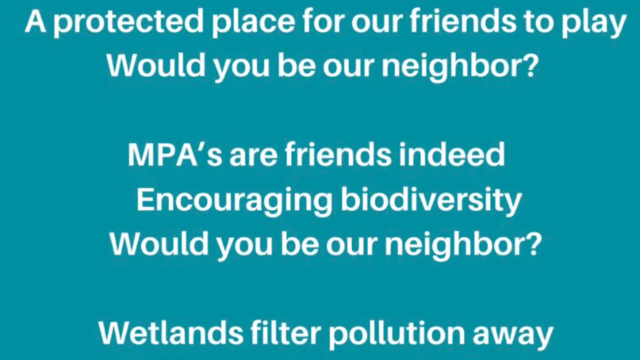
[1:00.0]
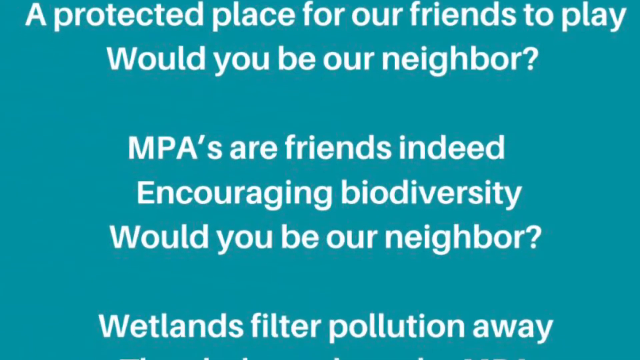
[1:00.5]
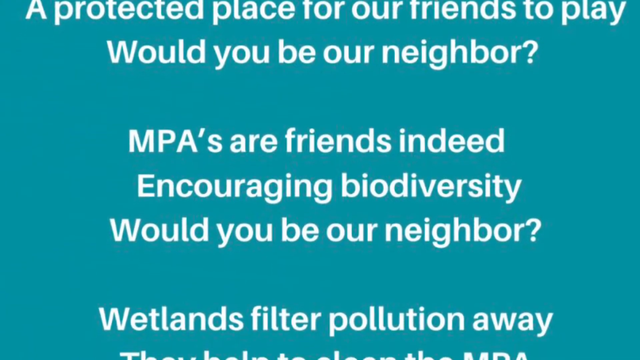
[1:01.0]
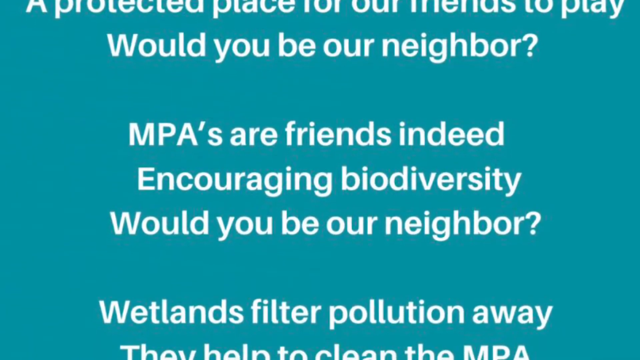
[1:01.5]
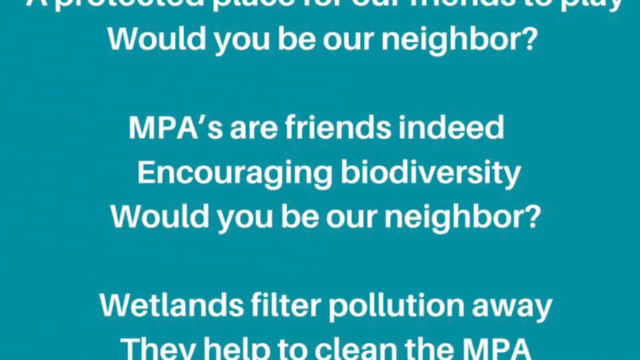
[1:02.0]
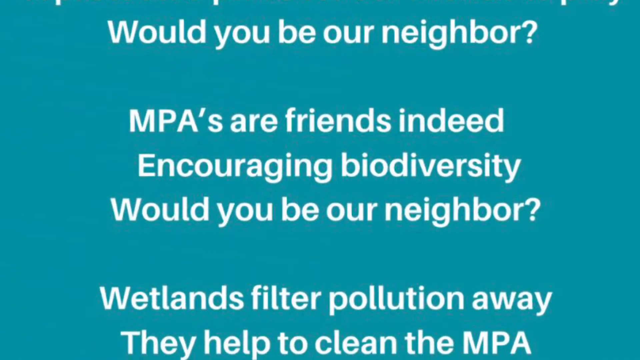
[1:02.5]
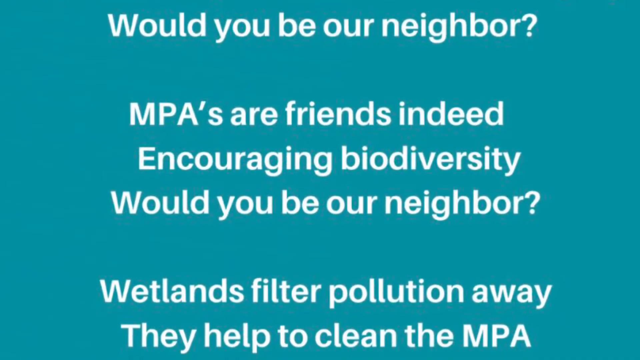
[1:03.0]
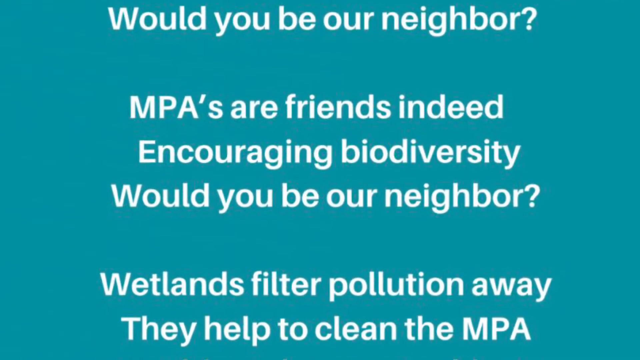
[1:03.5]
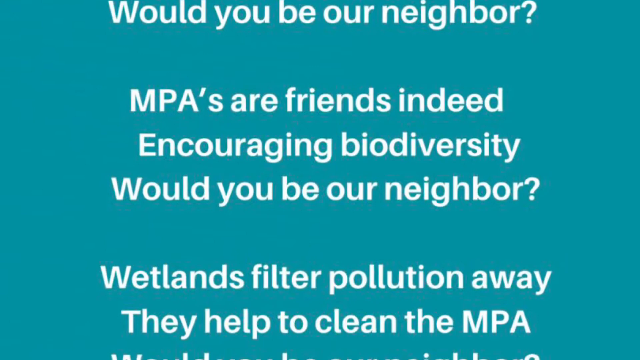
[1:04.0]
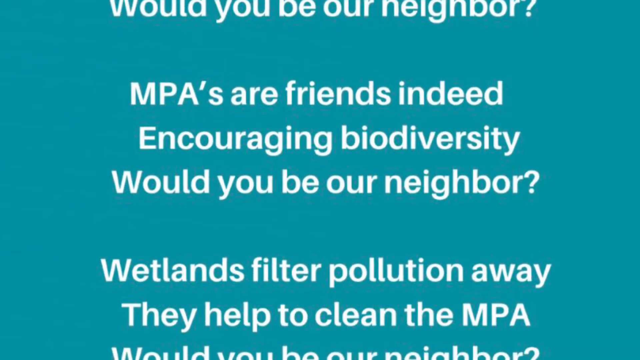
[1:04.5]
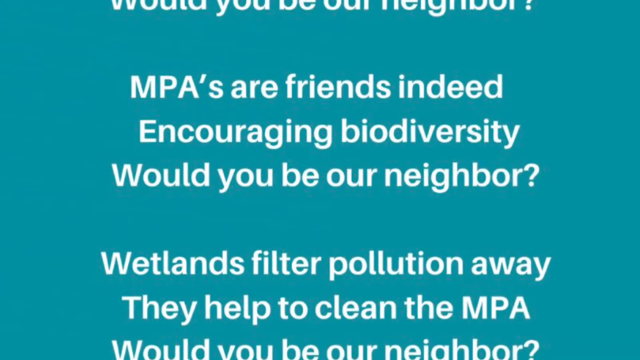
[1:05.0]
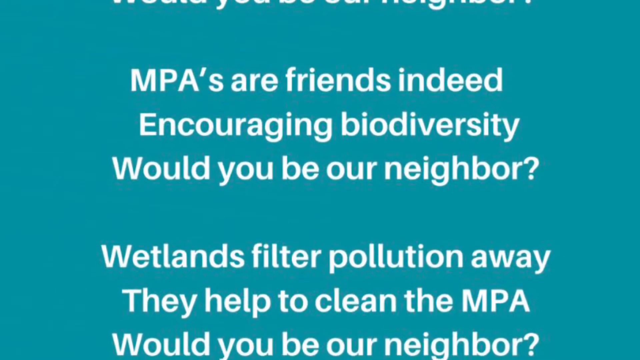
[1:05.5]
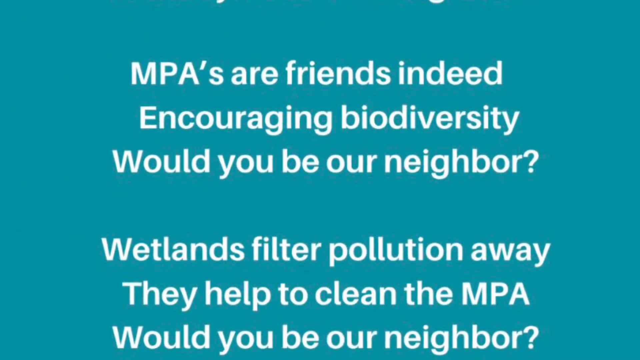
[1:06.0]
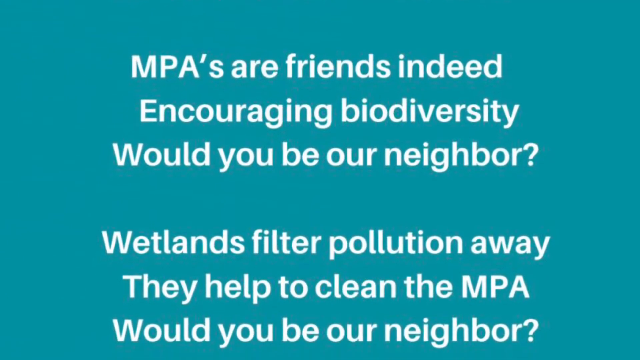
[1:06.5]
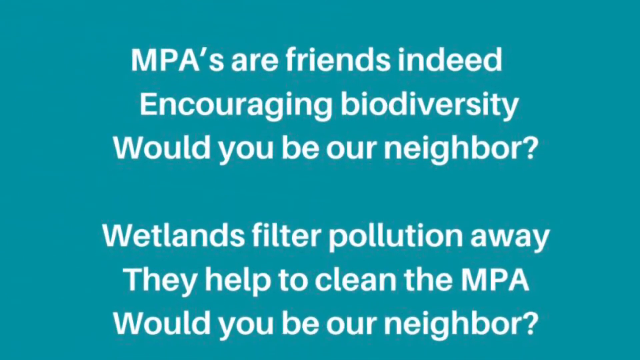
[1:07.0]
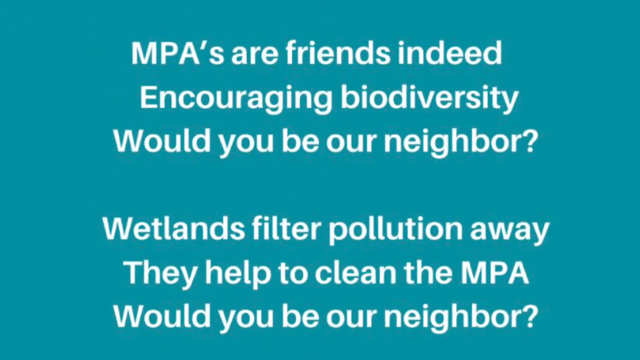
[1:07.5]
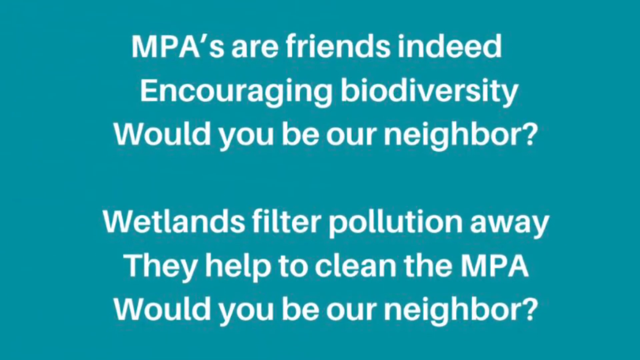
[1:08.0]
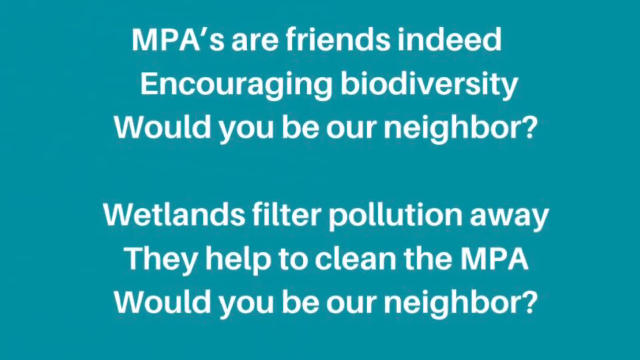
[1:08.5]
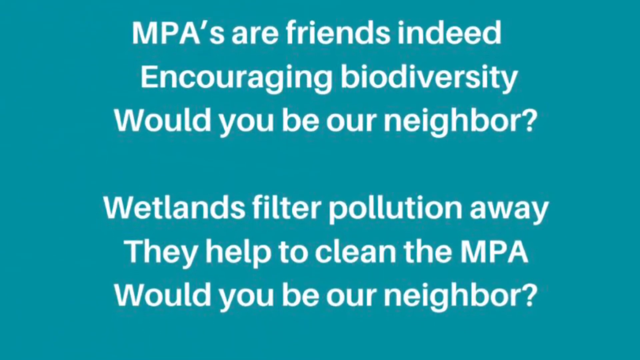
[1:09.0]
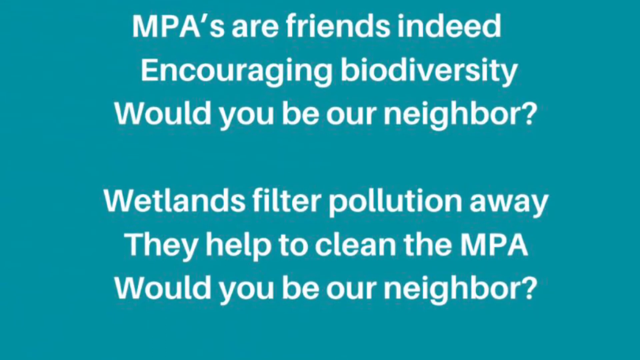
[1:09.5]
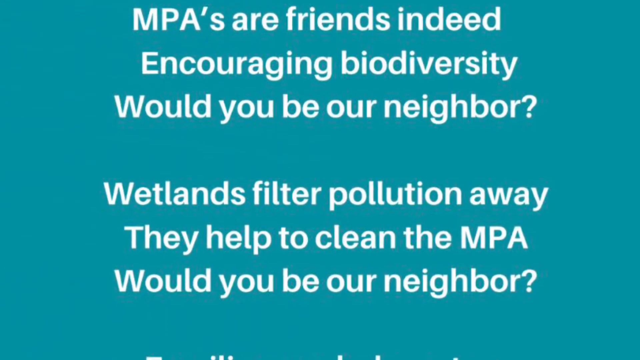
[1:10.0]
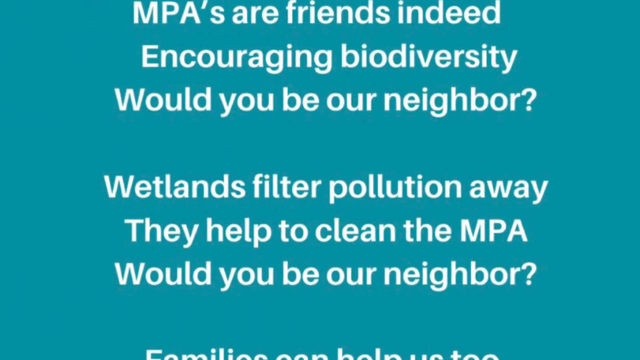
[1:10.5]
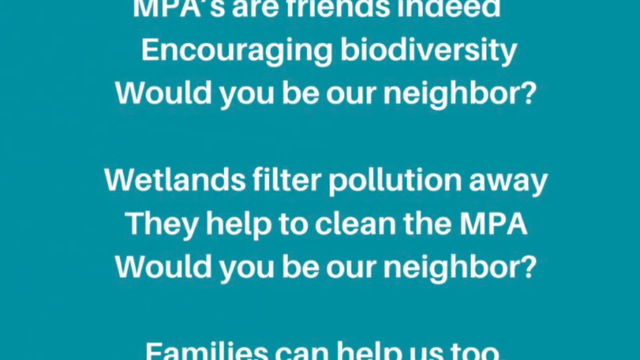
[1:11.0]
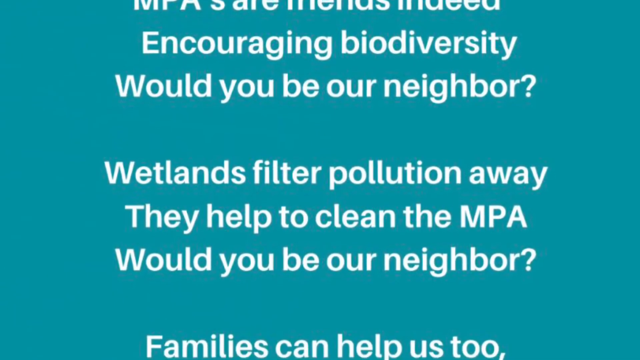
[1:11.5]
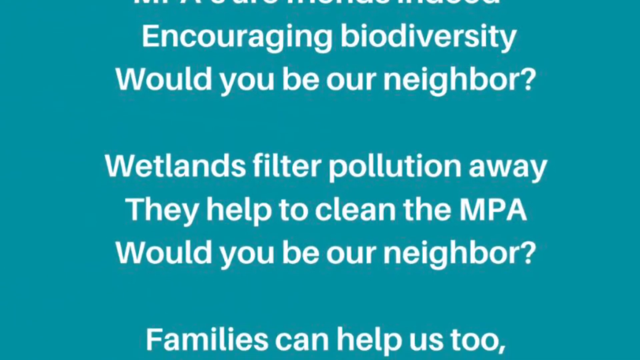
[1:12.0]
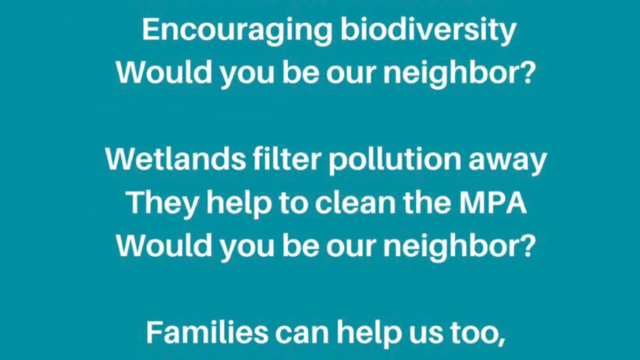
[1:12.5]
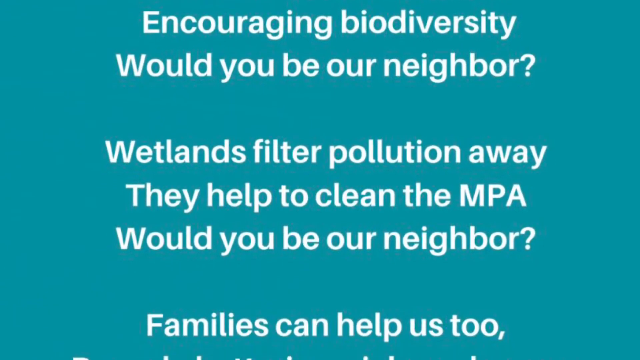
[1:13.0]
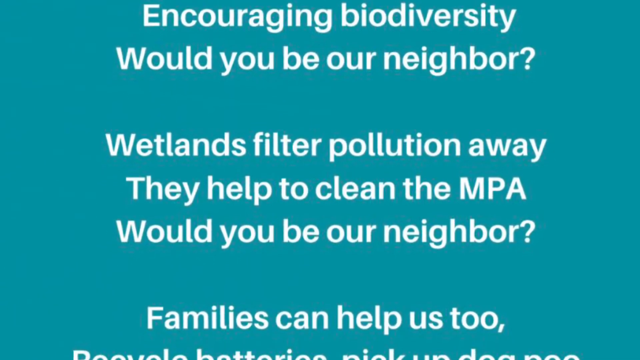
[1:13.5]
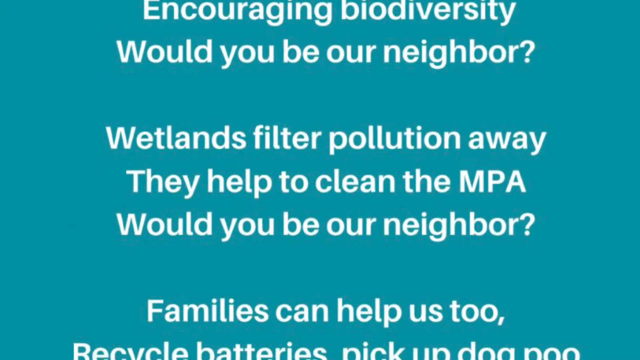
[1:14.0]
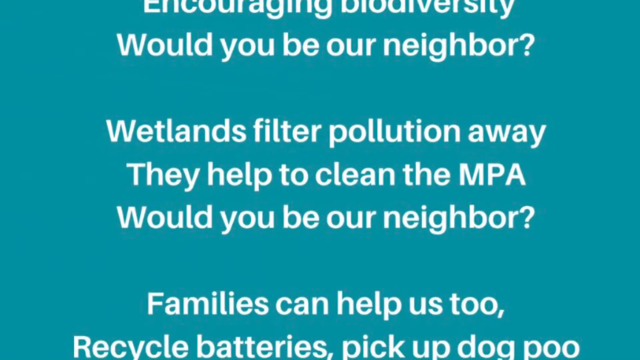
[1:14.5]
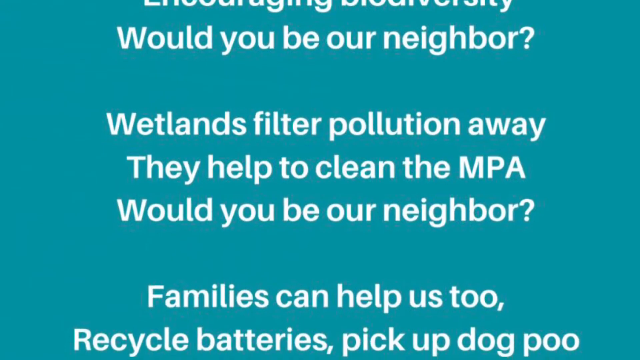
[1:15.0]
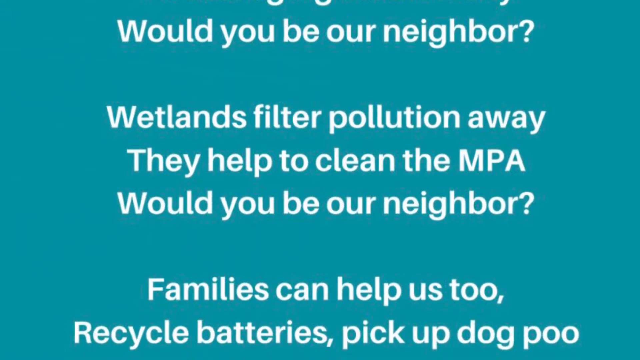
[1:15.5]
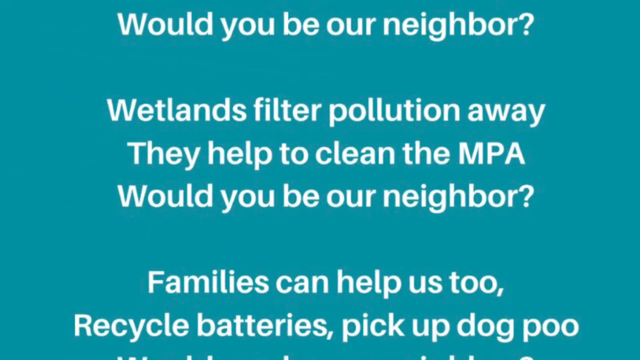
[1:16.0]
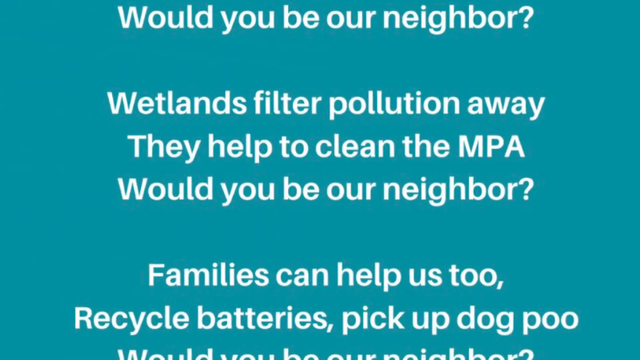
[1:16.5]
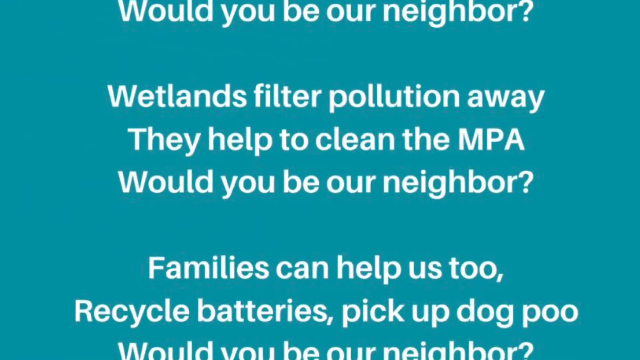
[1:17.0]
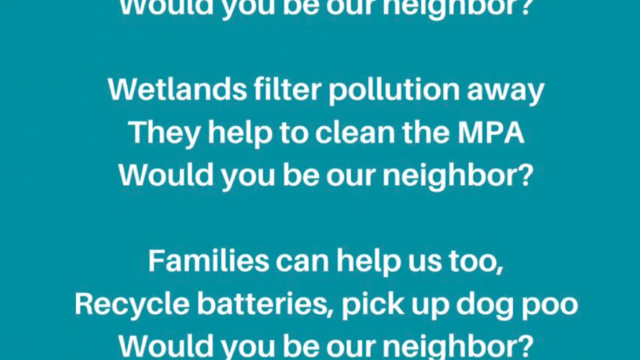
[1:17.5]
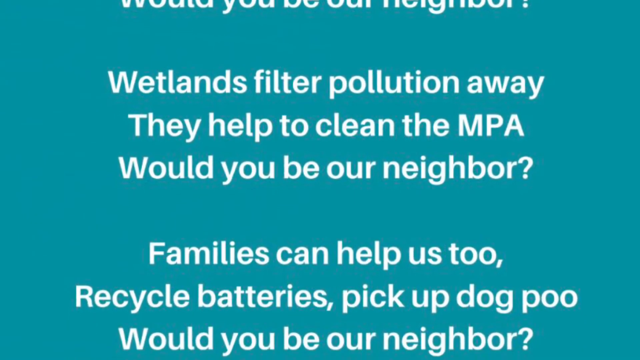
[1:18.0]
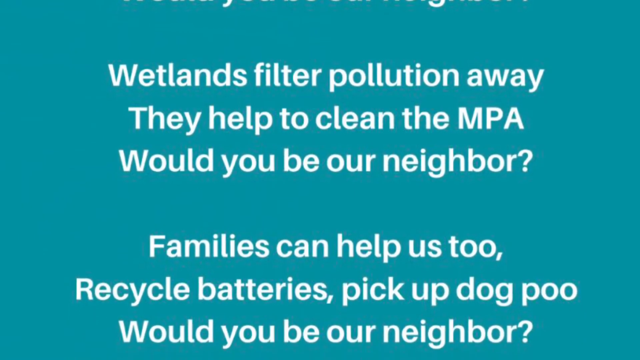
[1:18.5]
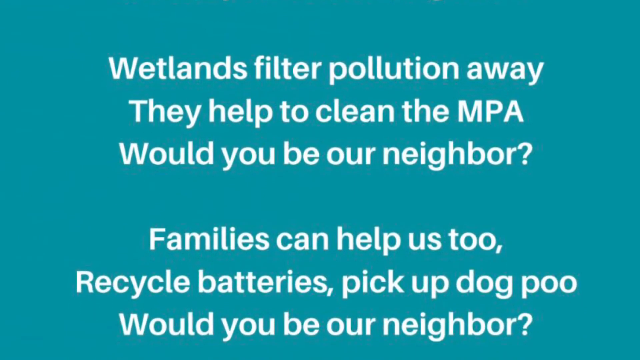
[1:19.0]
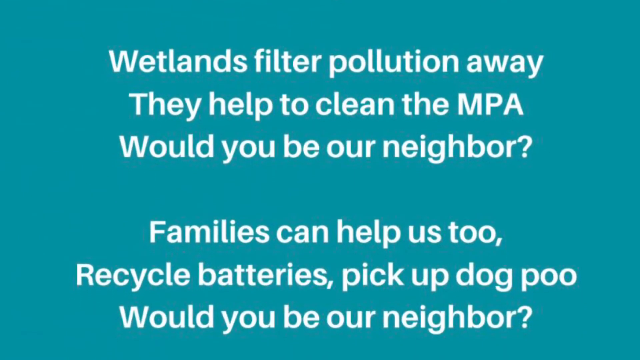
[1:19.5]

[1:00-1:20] A blue screen shows words written in bold white letters that are easy to read: "a protected place for our friends to play. Would you be our neighbor? MPAs are friends indeed, encouraging biodiversity, would you be our neighbour? Wetlands filter pollution away. They help to clean the MPA. Would you be our neighbour? Families can help us too. Recycle batteries, pick up dog poo. Would you be our neighbor?" The text seems to be about protecting the species in the sea and fighting pollution.